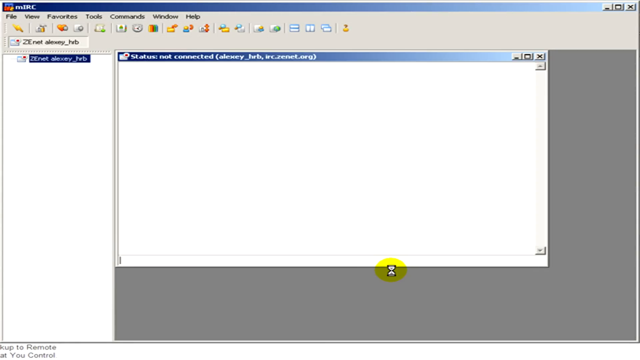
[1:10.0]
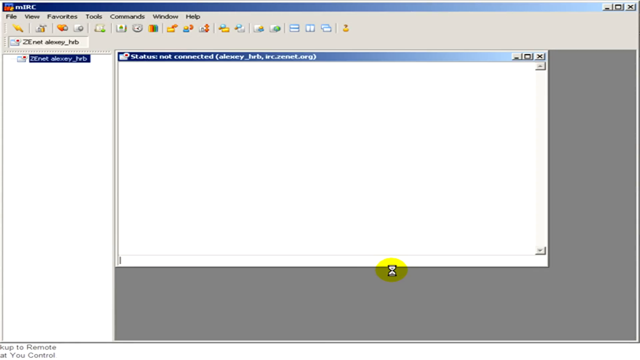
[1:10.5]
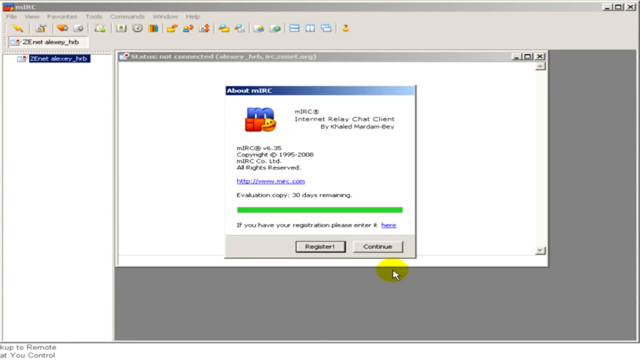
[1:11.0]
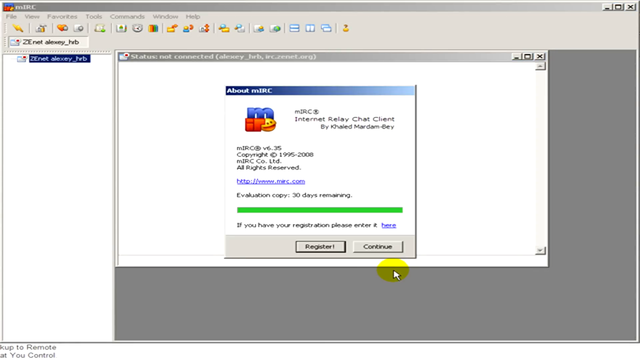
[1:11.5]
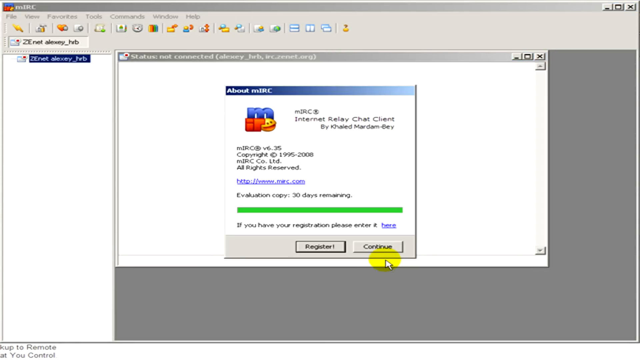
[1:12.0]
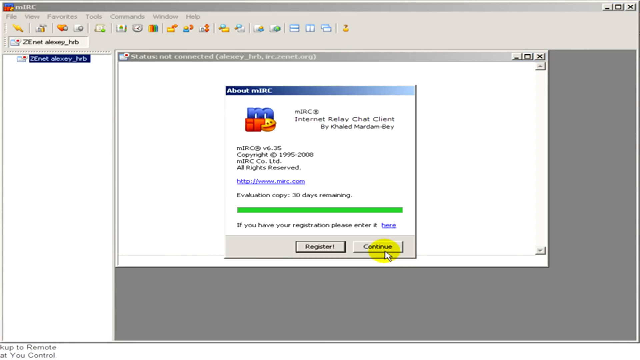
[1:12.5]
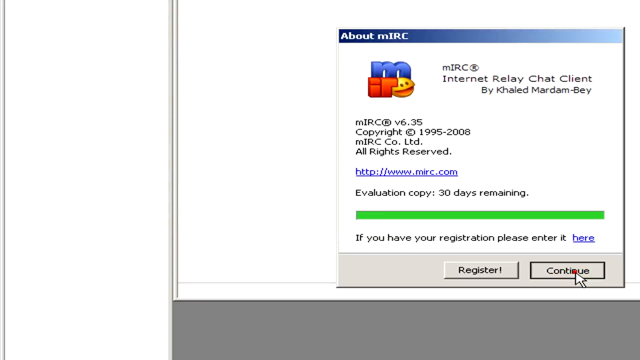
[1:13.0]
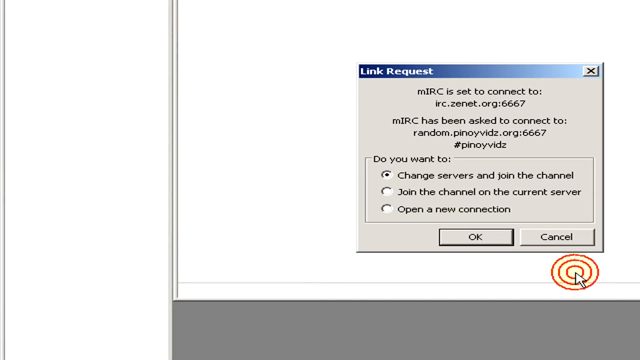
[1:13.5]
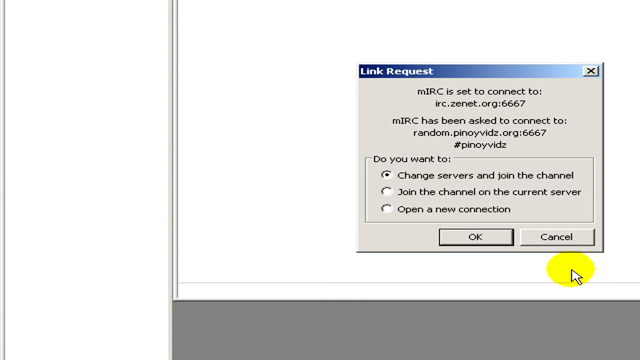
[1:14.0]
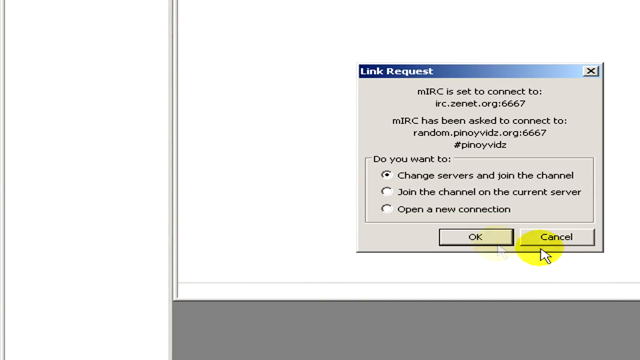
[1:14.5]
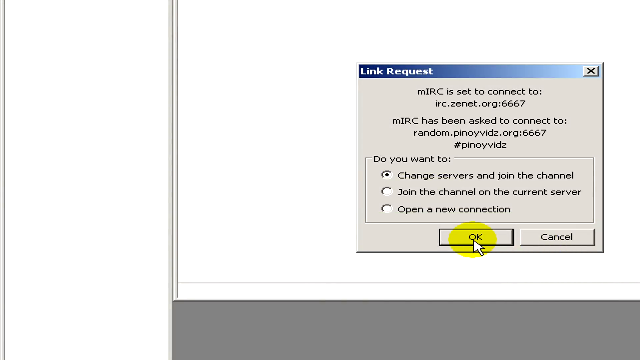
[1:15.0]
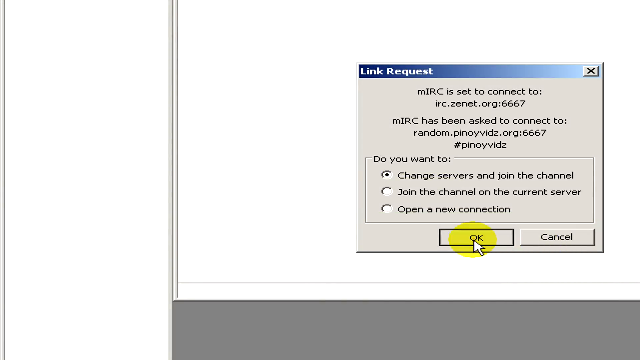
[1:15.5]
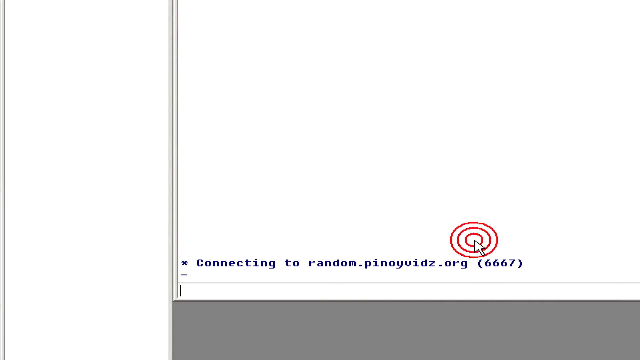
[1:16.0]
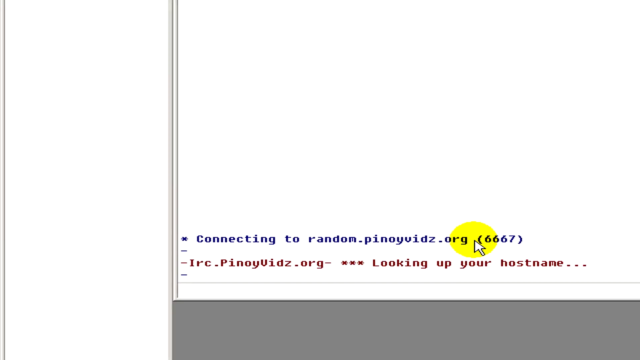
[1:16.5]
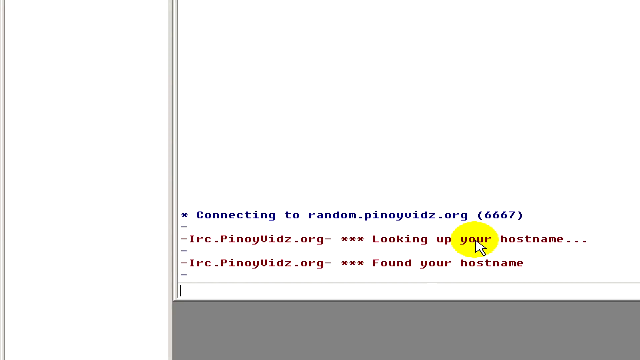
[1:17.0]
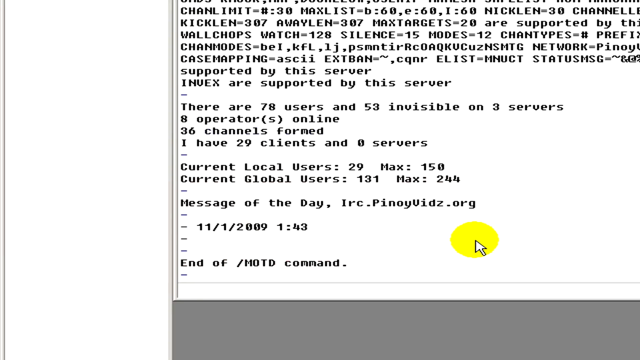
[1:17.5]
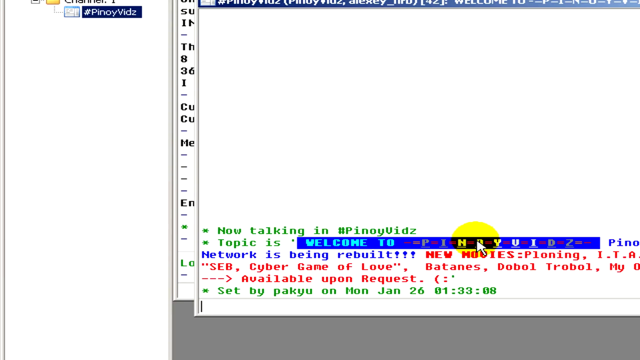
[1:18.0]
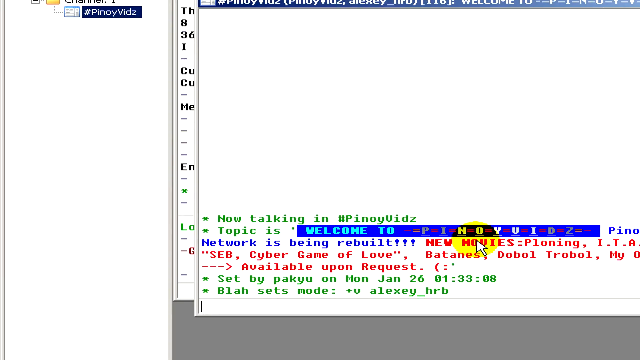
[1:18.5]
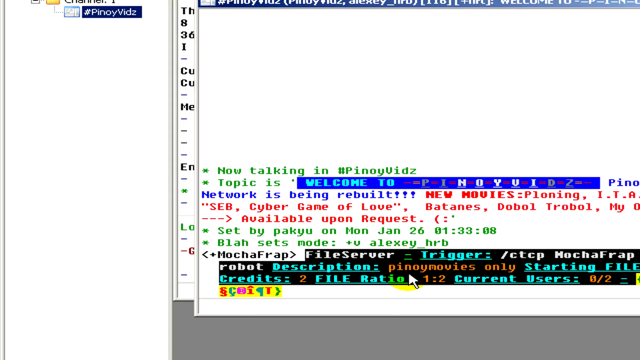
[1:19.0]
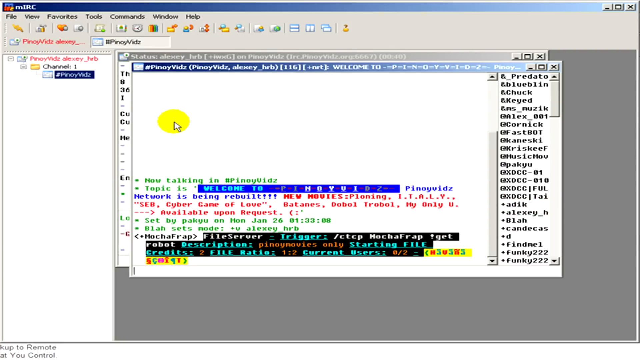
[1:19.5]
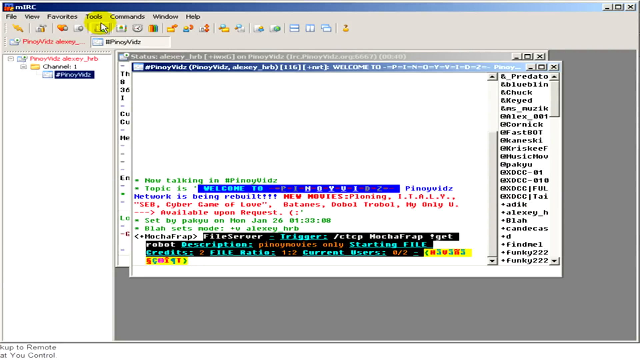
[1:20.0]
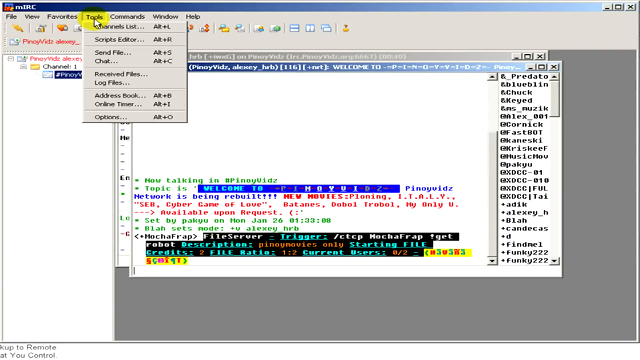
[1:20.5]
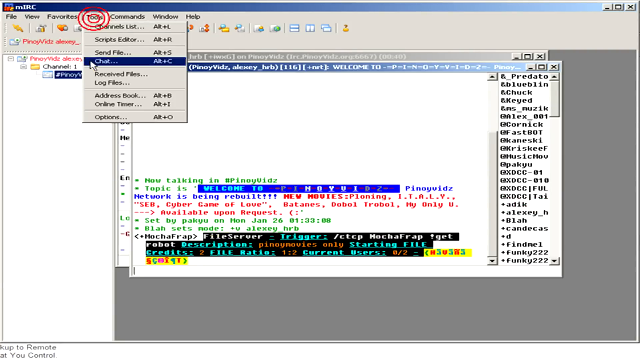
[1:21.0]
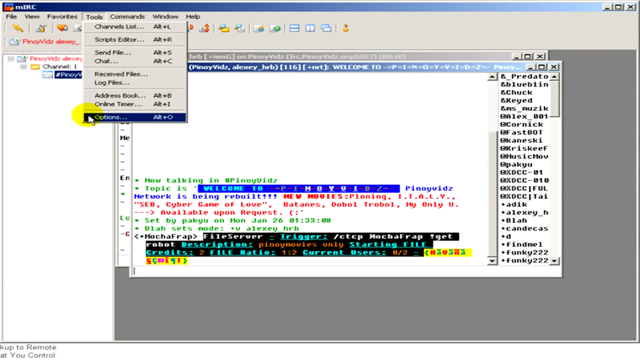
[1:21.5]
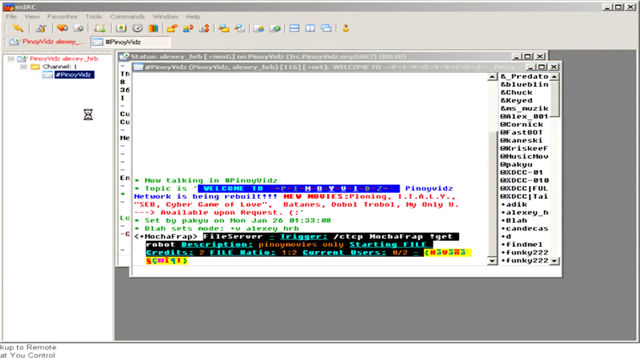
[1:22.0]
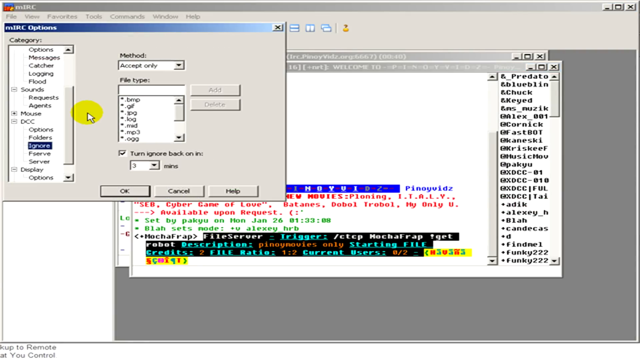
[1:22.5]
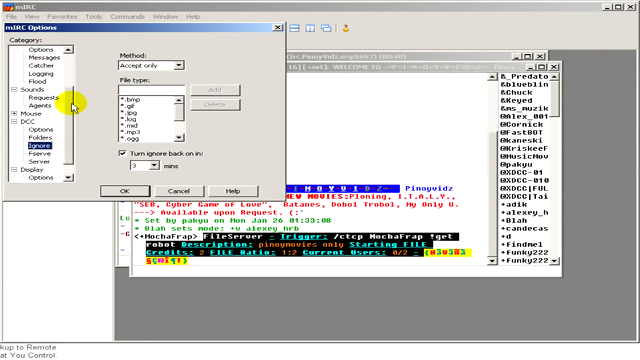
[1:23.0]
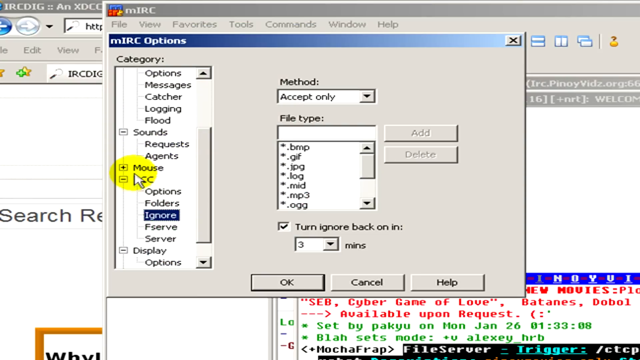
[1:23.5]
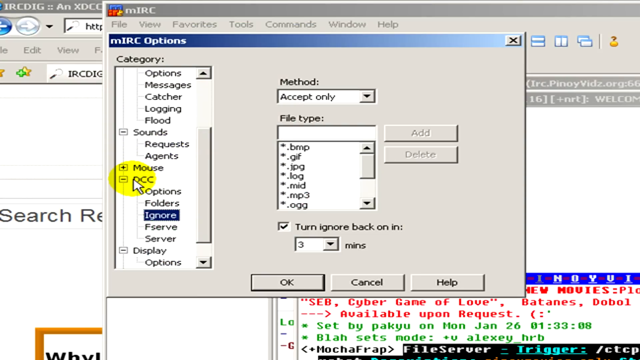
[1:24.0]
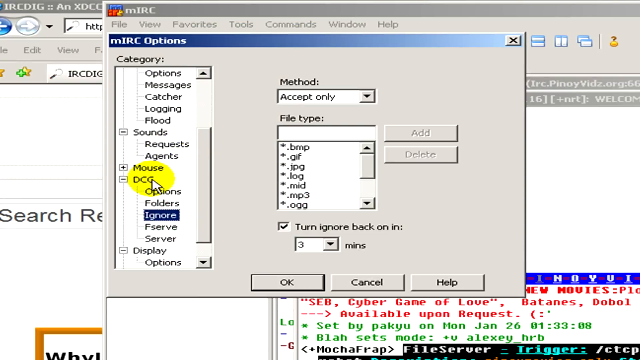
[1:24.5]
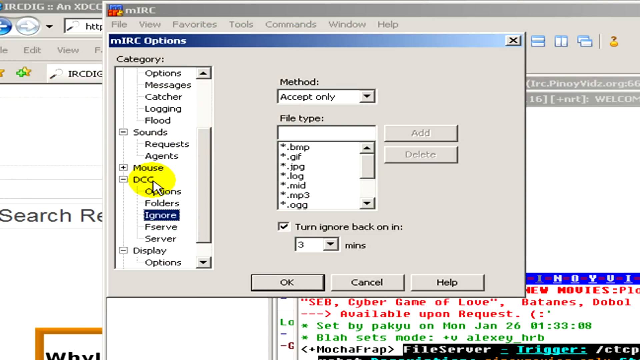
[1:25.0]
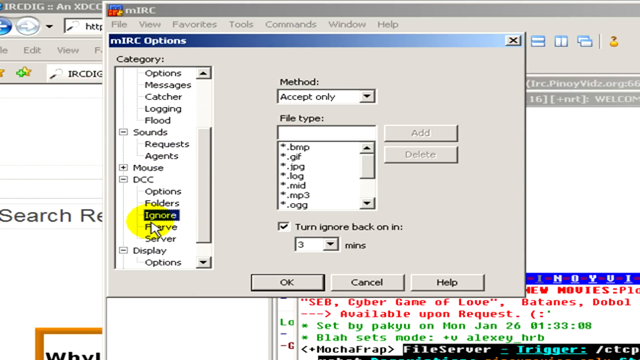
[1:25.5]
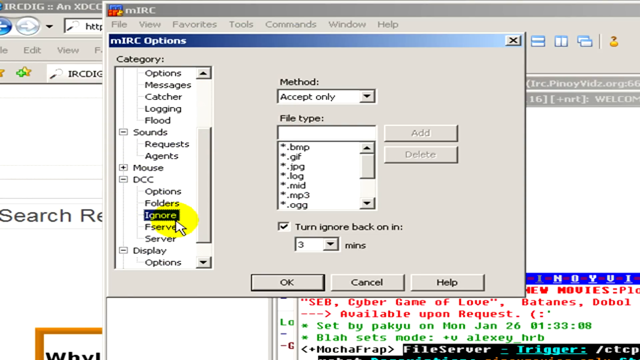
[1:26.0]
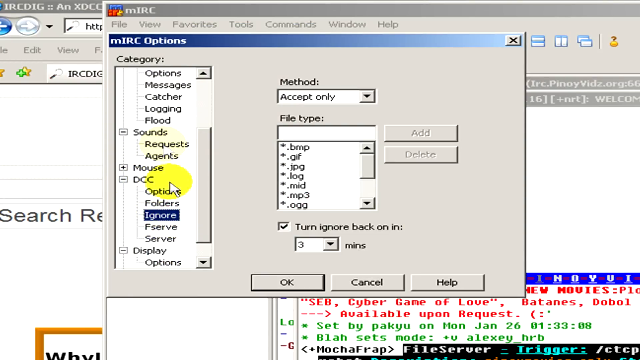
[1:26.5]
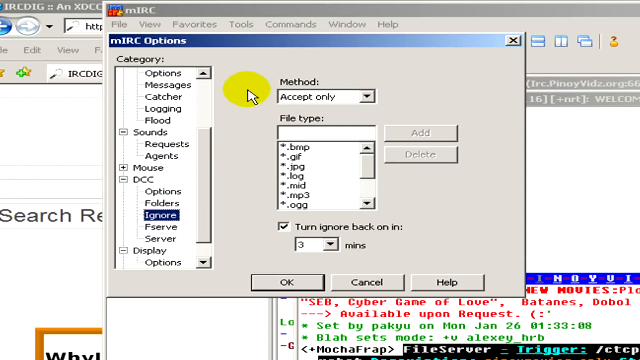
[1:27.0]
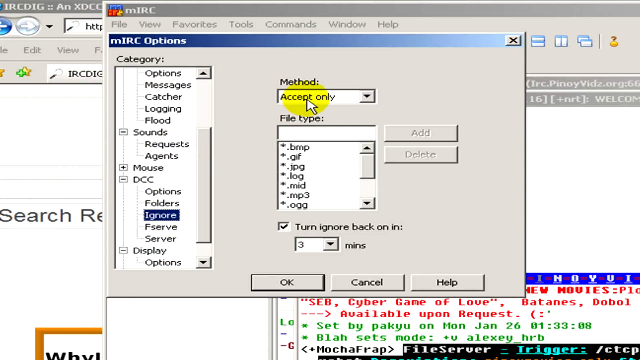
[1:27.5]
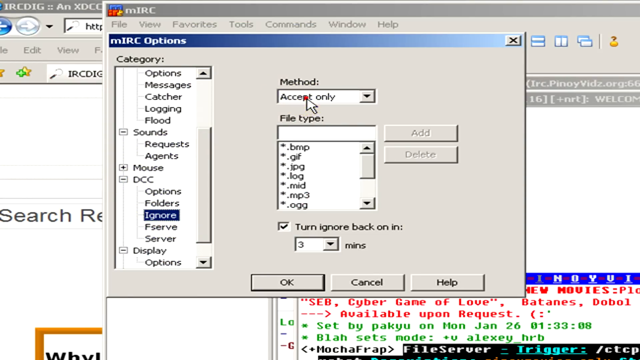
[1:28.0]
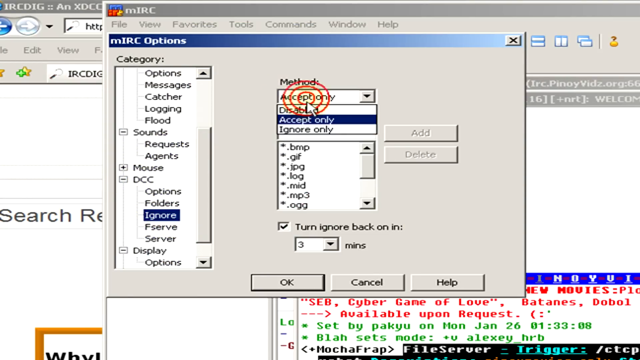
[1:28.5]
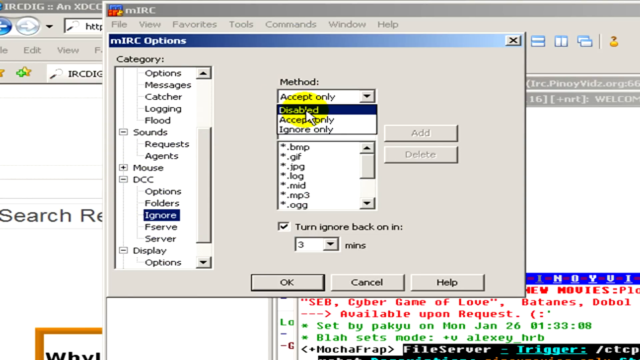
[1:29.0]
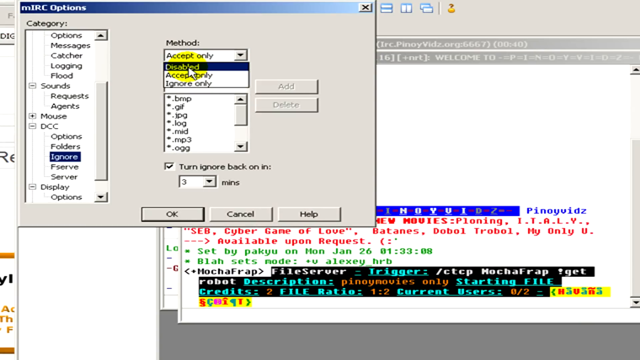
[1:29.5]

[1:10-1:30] The video shows an old page, maybe a coding page or file page, with code shown in a number of different colors. The yellow cursor opens up several boxes, and a lot of information is shown. First a box with a green bar at the bottom quickly appears and disappears. The code box opens, and then an mIRC options box opens. The cursor goes to the message methods tab, which offers three methods to choose from; the method is originally set to accept only and is changed to disabled. The video then returns to the original screen, where a couple of white rectangular boxes show no information. A thin blue rectangular title bar at the top has a few words, and File, View, Favorites, Tools, Commands, Window and Help appear at the top left of the screen.